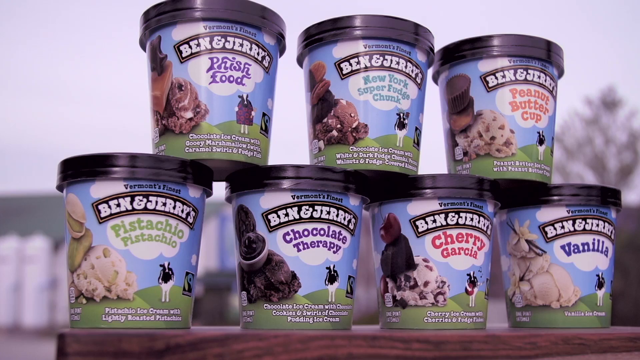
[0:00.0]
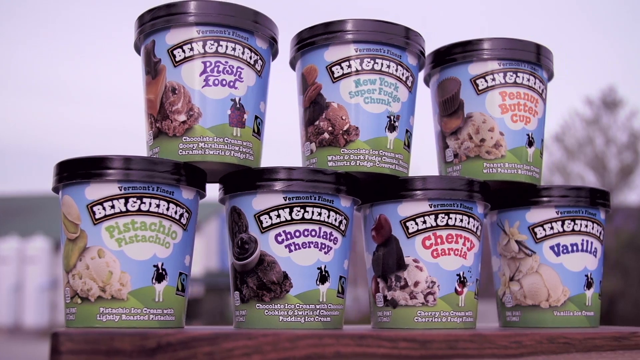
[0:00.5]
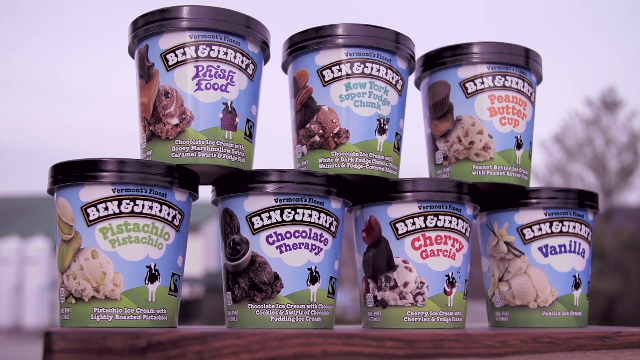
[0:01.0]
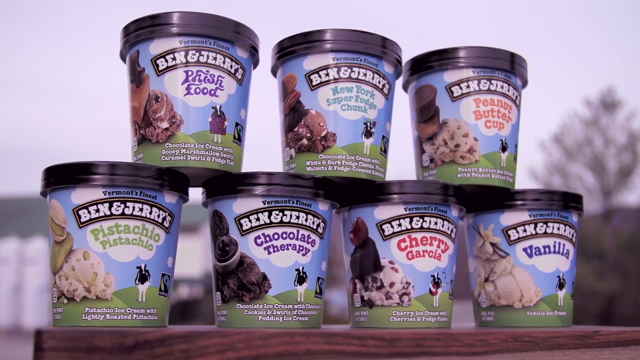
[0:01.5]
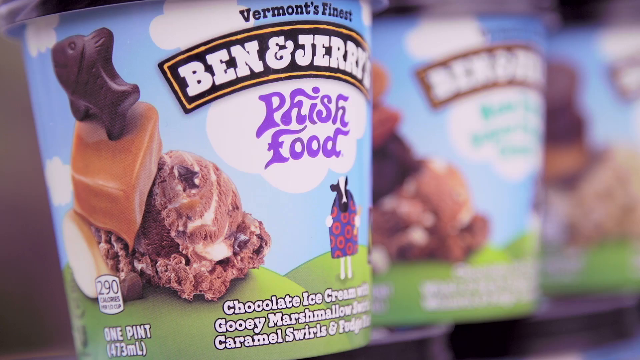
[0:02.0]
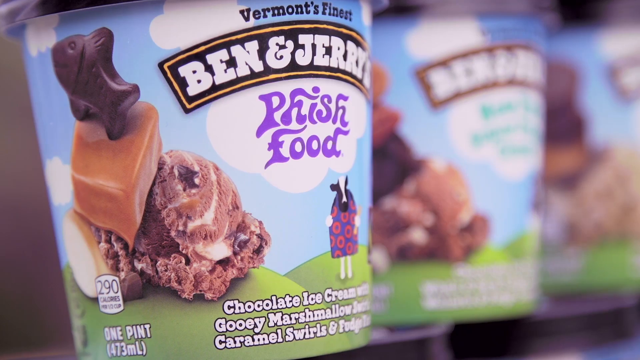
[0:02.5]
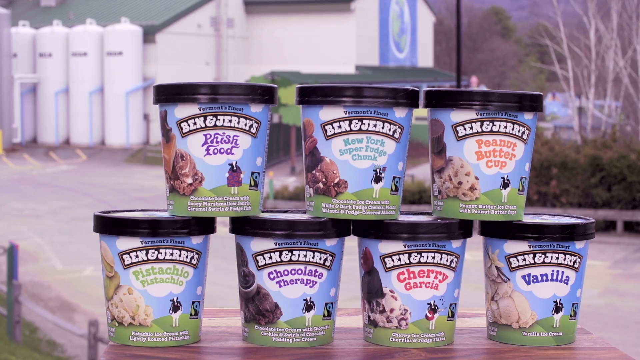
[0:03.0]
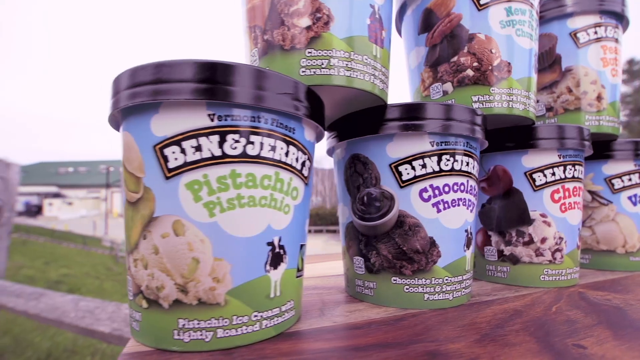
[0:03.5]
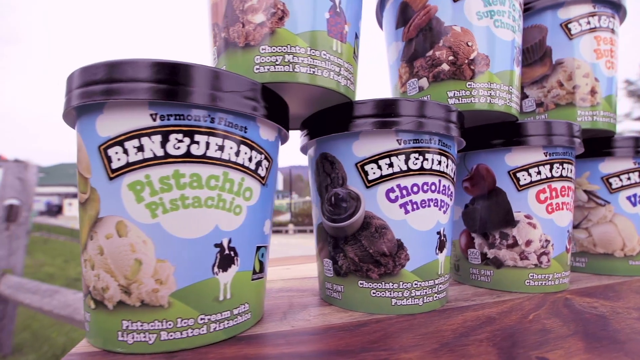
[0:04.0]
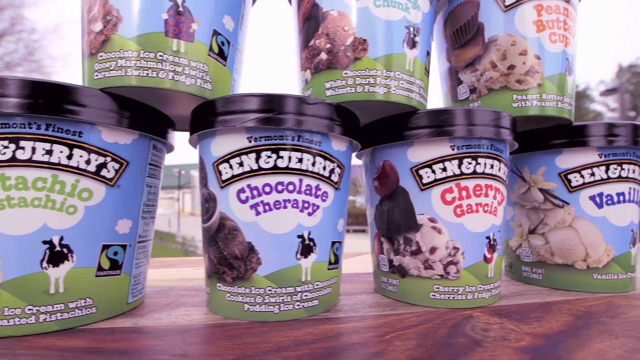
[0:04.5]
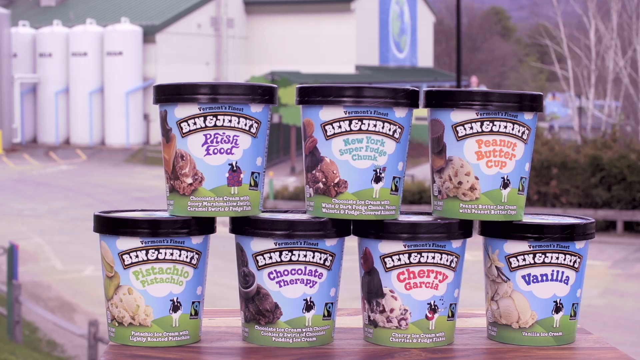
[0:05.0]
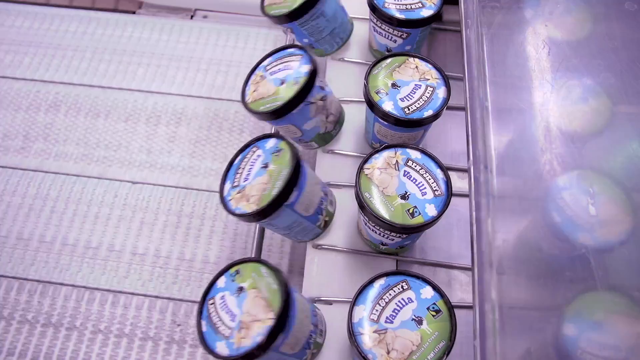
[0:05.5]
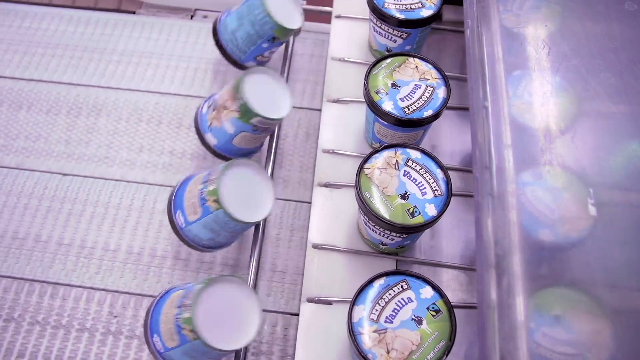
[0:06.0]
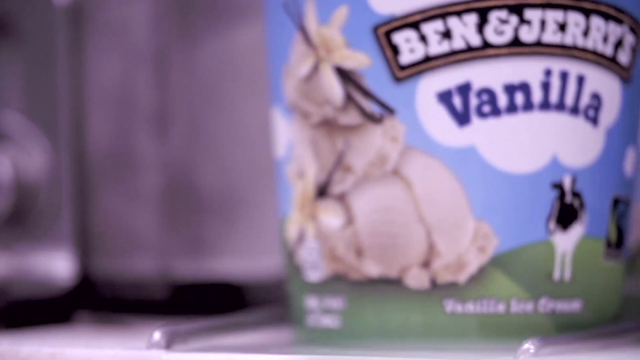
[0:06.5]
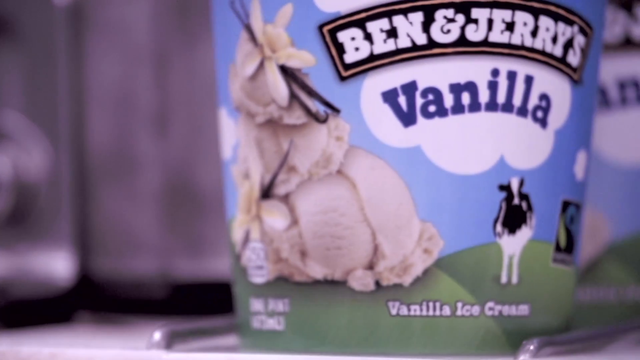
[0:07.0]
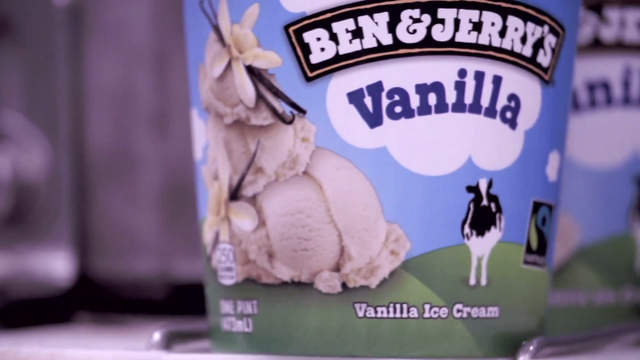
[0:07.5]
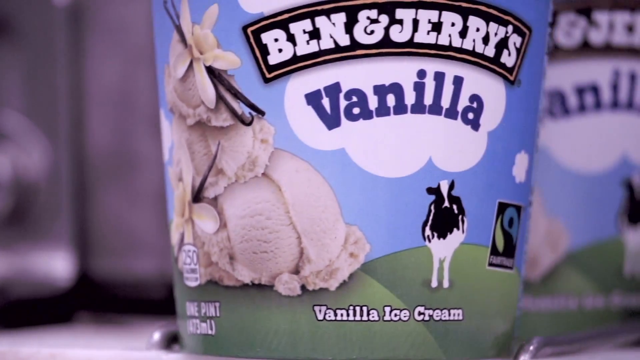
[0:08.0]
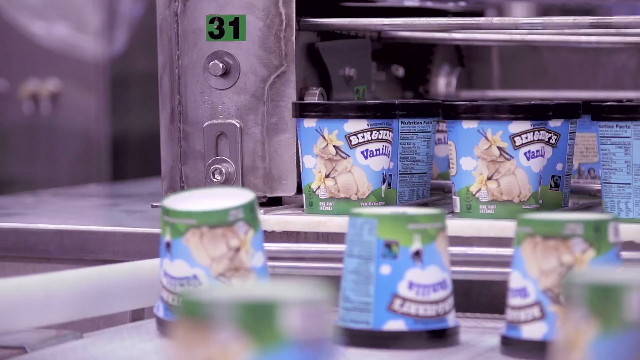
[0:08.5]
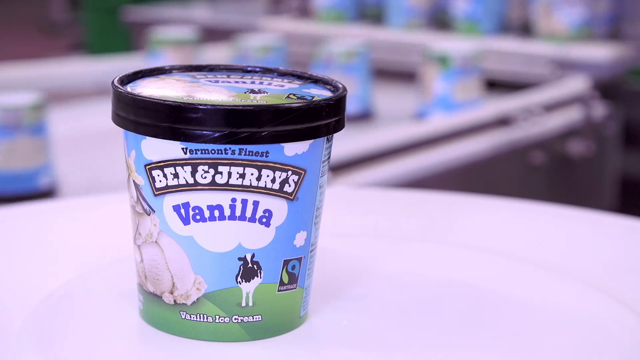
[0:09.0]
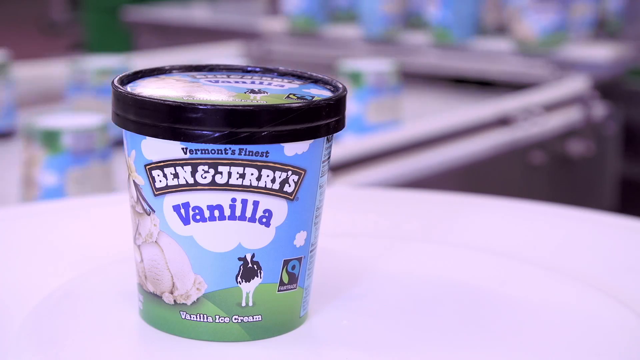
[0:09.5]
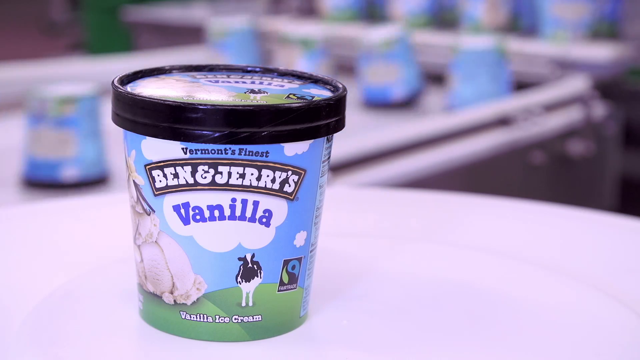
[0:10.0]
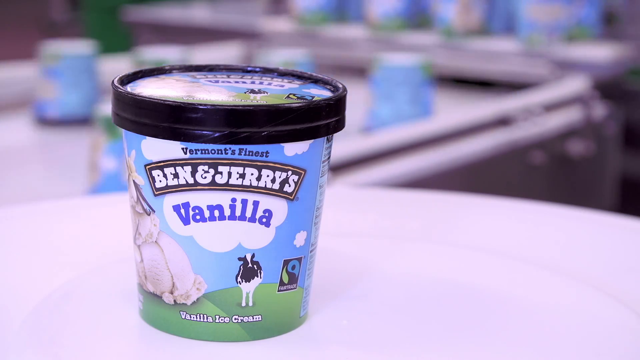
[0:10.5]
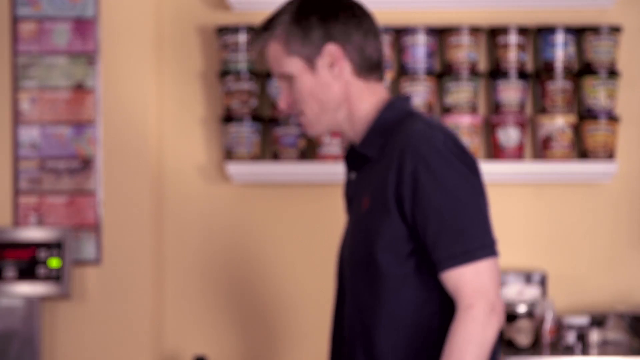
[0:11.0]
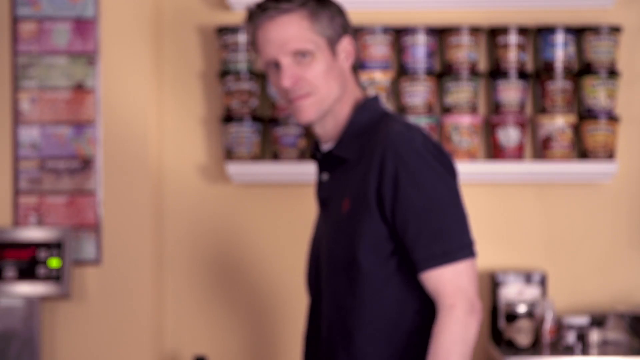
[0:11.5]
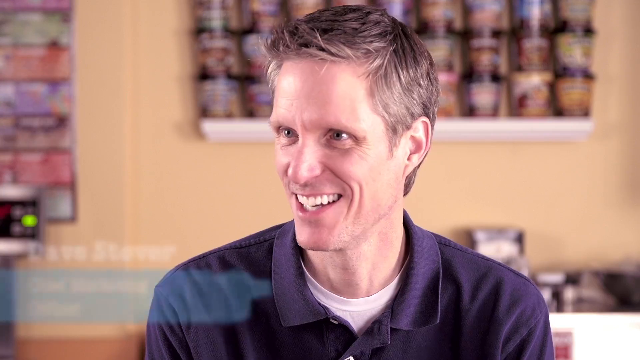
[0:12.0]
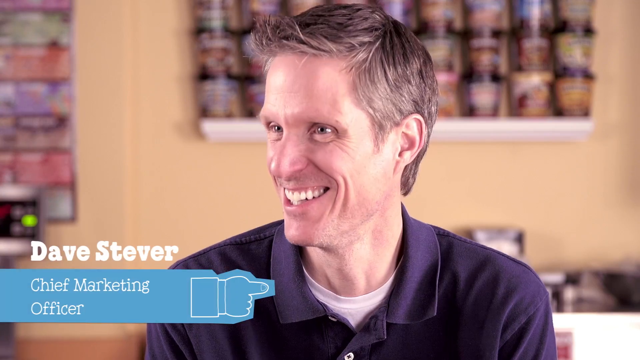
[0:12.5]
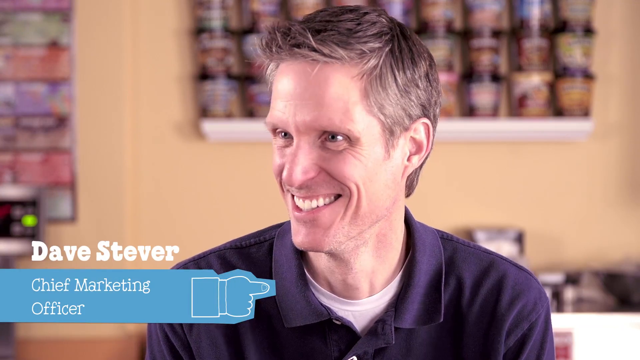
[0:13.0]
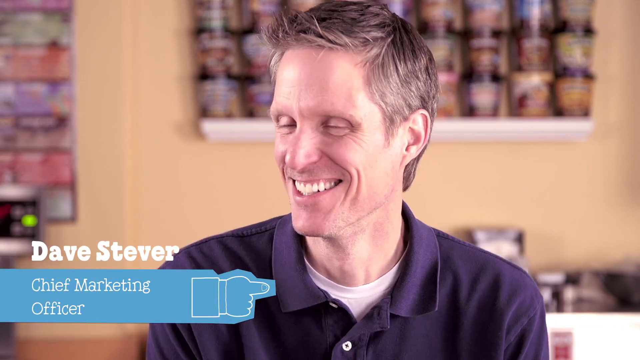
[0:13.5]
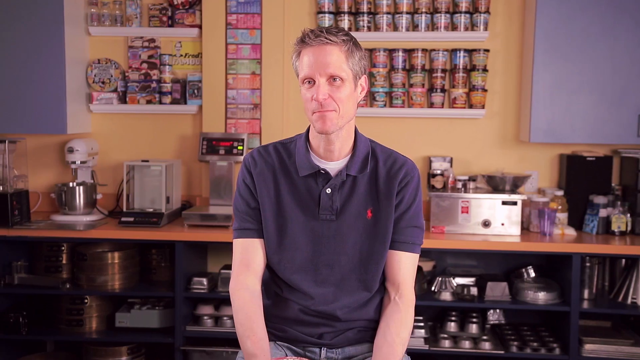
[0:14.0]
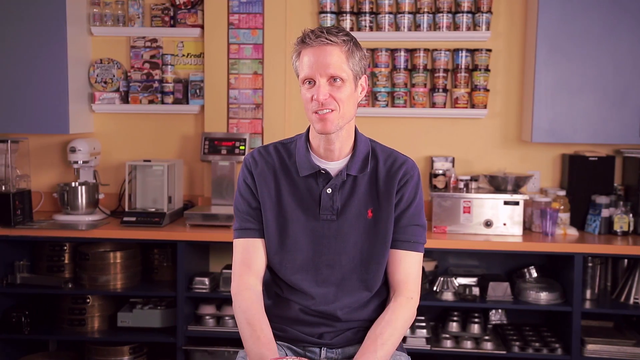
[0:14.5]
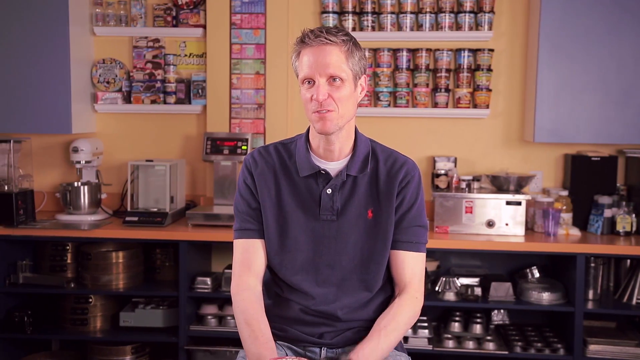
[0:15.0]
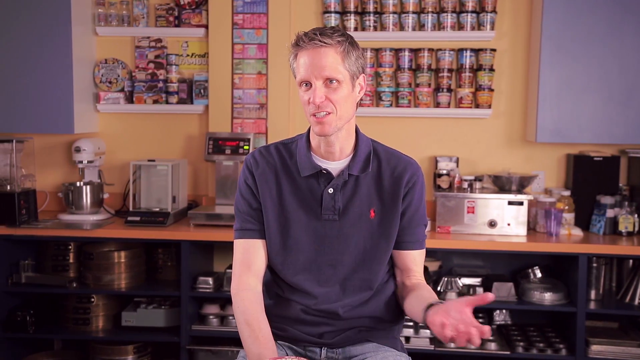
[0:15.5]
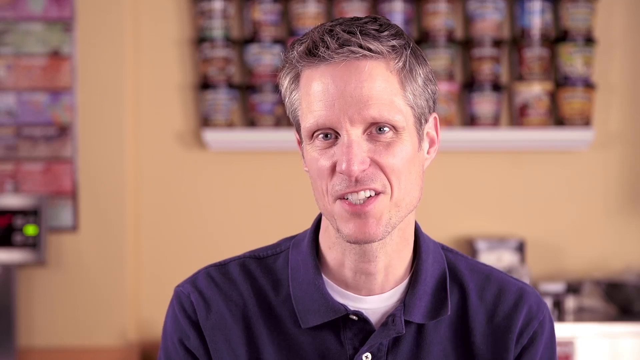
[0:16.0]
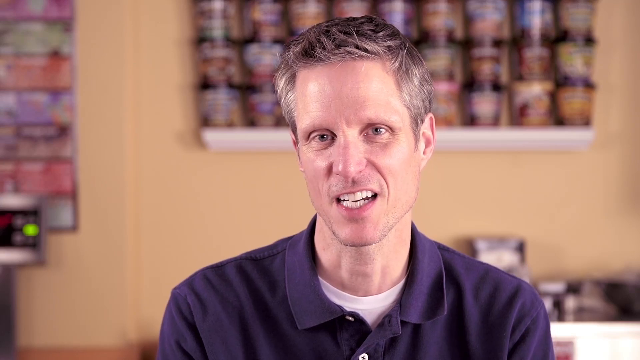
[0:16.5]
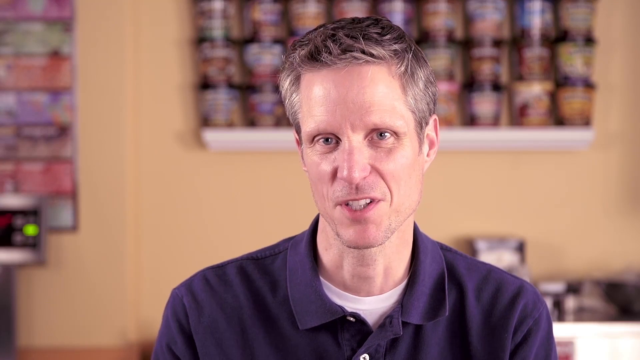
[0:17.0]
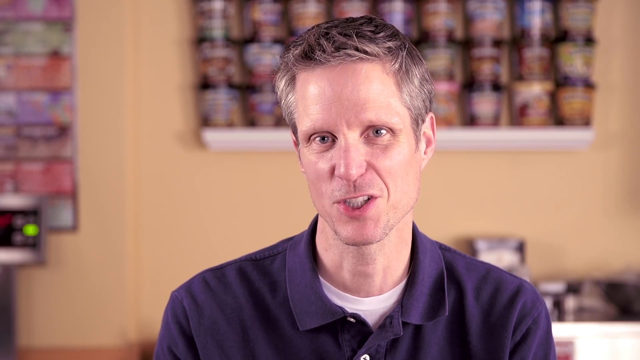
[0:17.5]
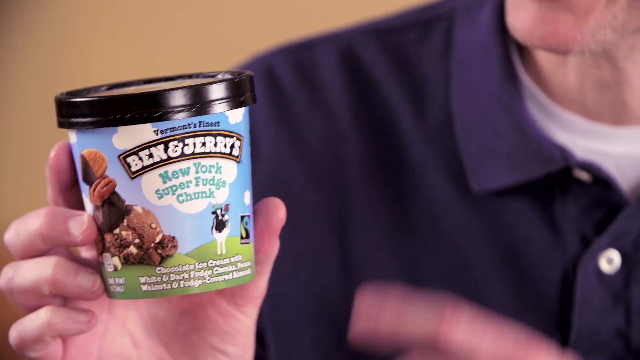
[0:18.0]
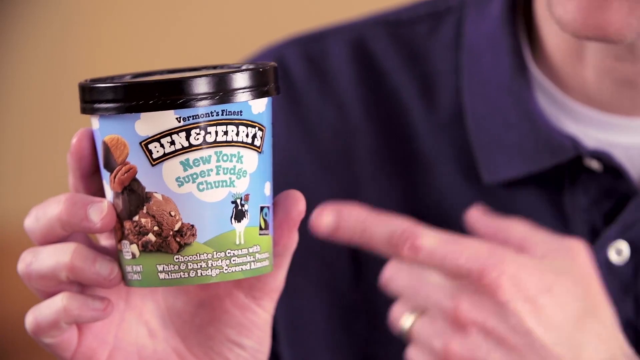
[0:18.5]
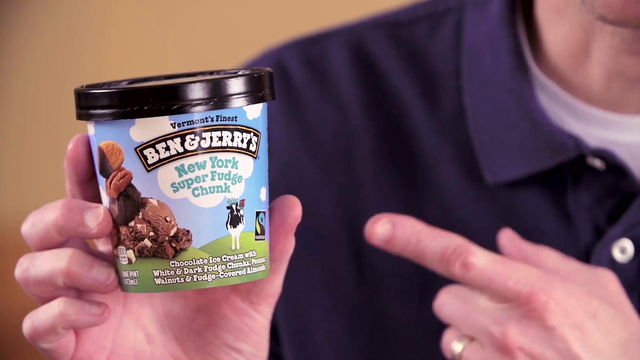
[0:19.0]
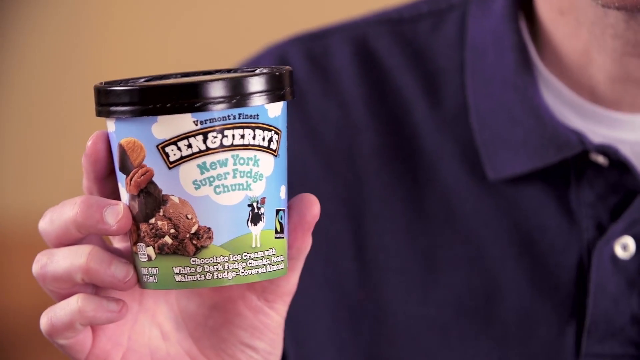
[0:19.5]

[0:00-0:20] Pints of Ben & Jerry's ice cream are stacked in two rows, three on top of four. Starting at the top left is Ben & Jerry's Phish Food, with "fish" spelled P-H-I-S-H, followed by New York Super Fudge Chunk and then Peanut Butter Cup. The bottom row, from left to right, holds Pistachio Pistachio, Chocolate Therapy, Cherry Garcia, and Vanilla. The pints are stacked on a wooden table, and each has a design featuring a cow and a picture of the ice cream showing what it looks like. In the distance a sky is visible, with the outline of a tree to the right.